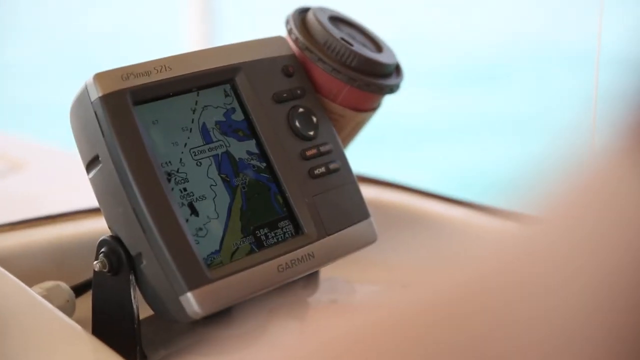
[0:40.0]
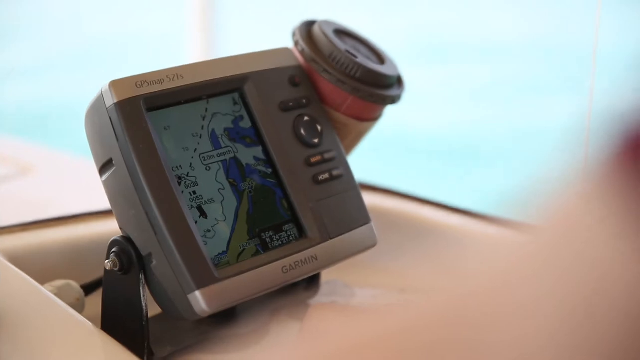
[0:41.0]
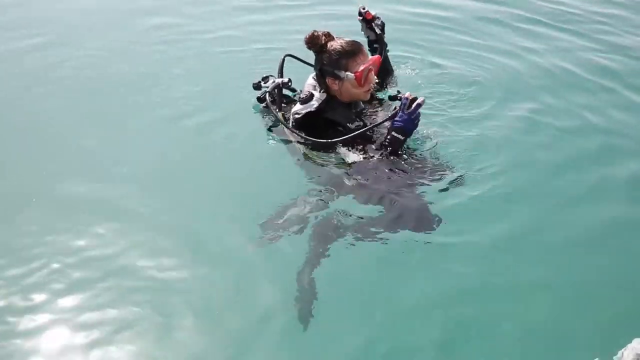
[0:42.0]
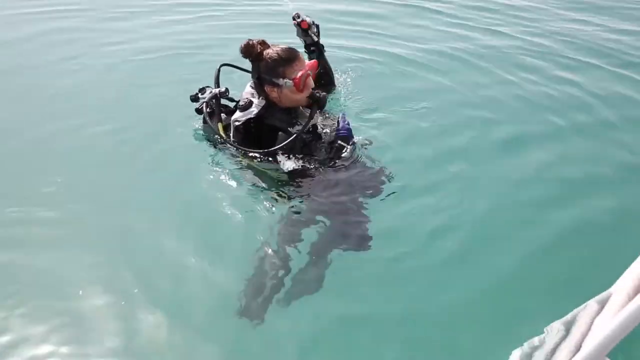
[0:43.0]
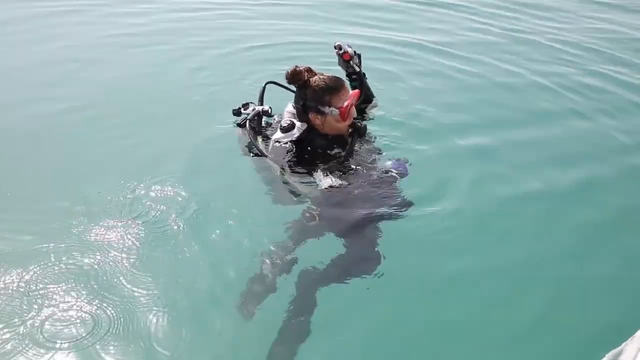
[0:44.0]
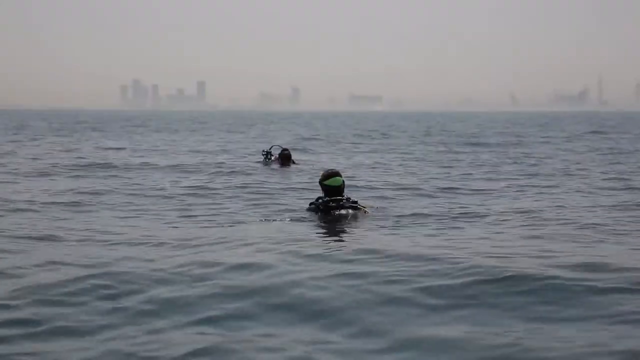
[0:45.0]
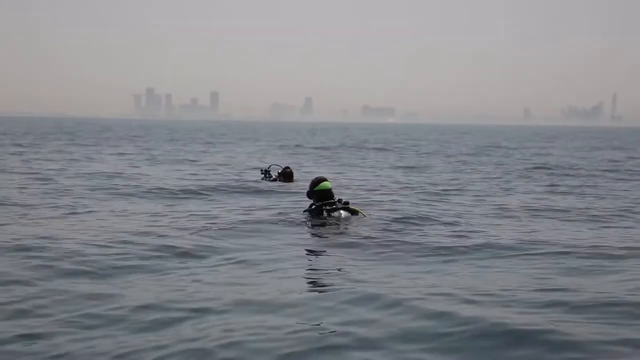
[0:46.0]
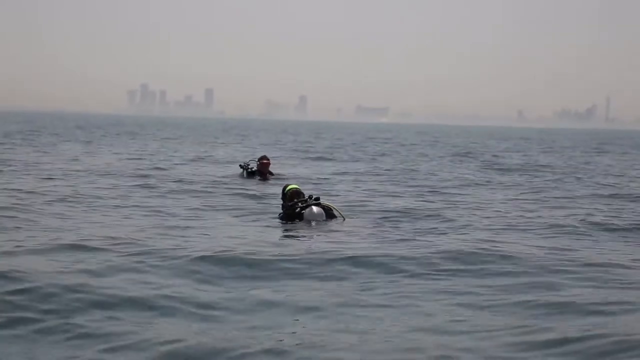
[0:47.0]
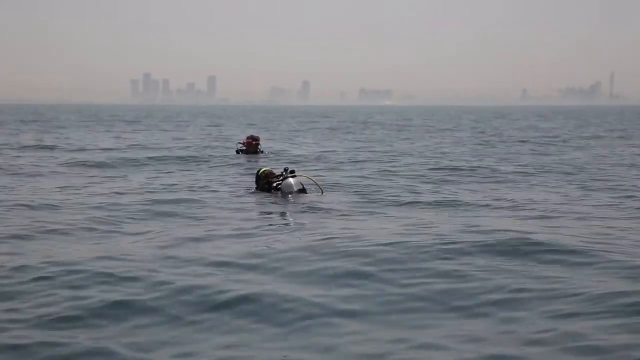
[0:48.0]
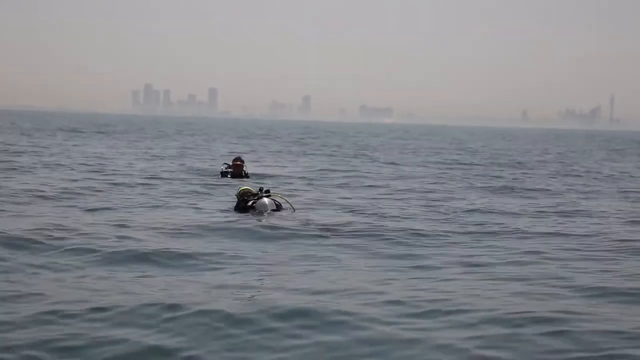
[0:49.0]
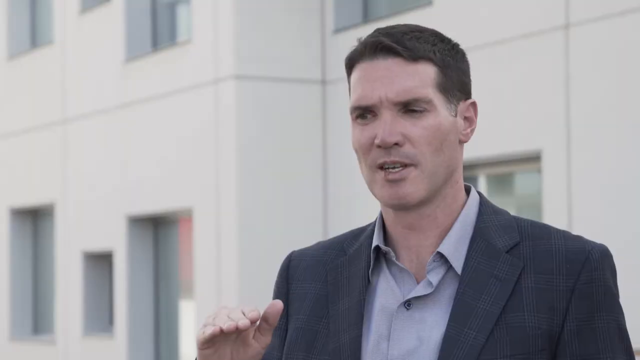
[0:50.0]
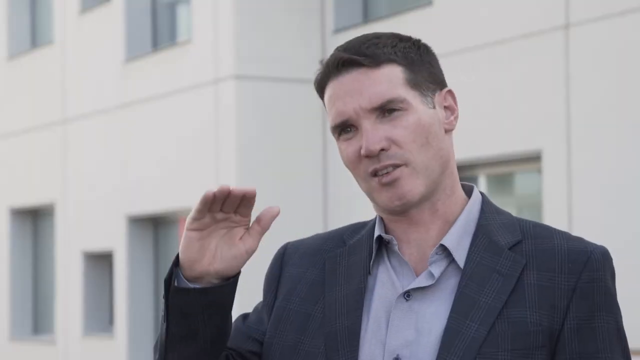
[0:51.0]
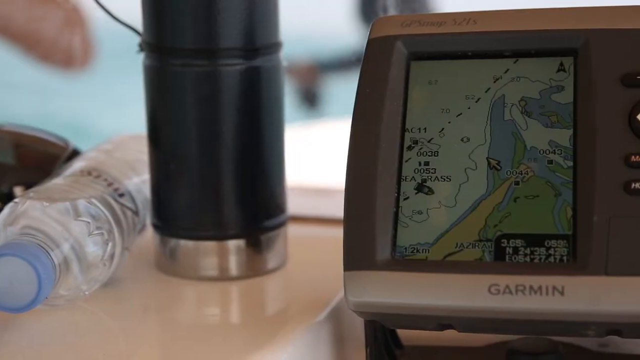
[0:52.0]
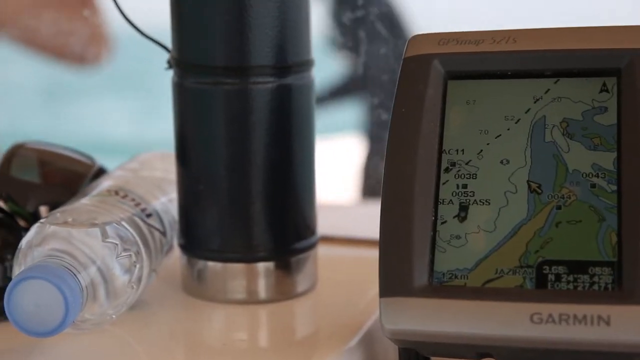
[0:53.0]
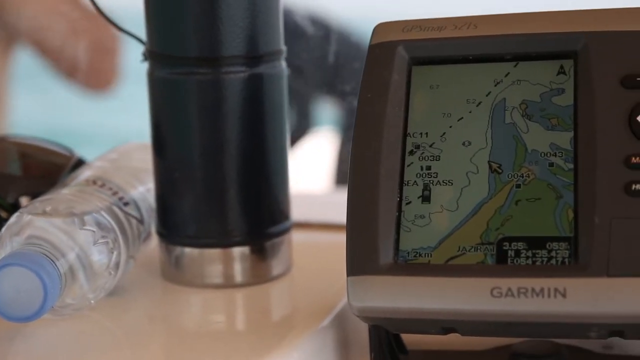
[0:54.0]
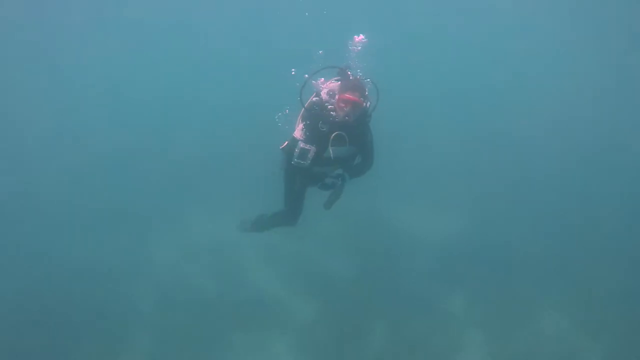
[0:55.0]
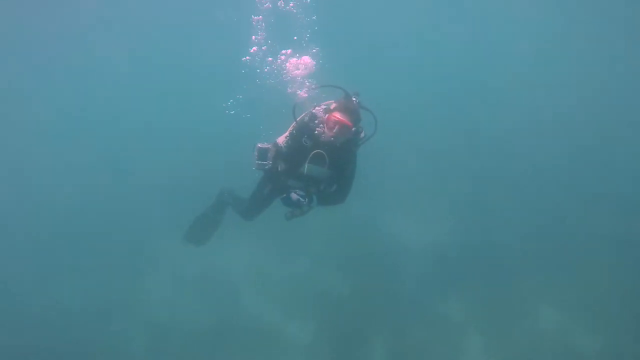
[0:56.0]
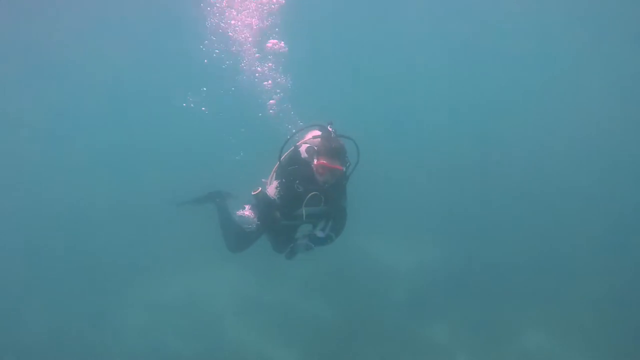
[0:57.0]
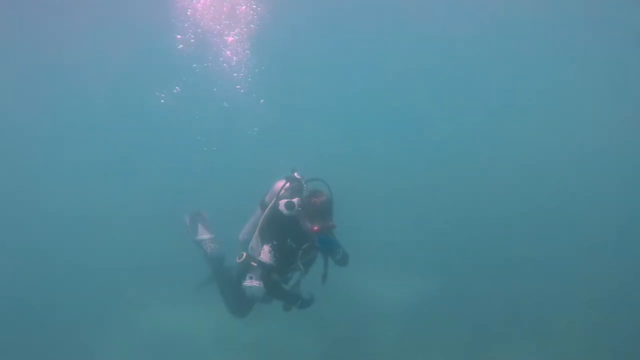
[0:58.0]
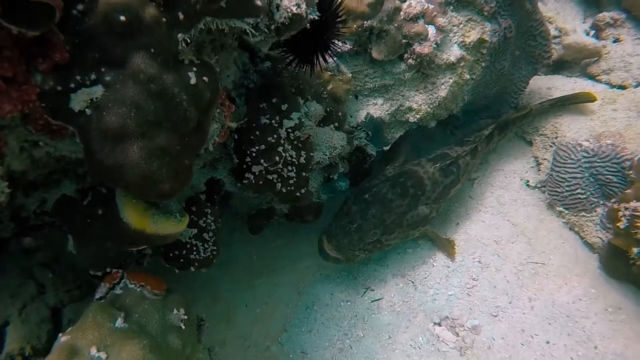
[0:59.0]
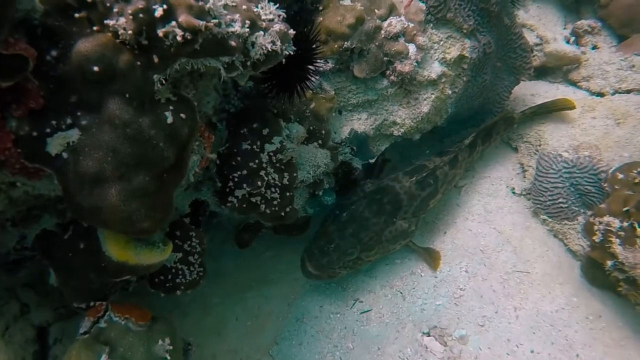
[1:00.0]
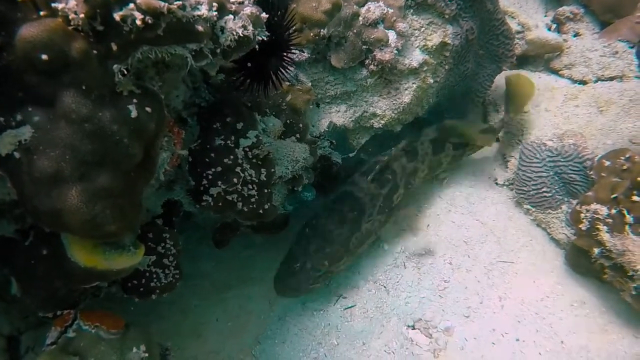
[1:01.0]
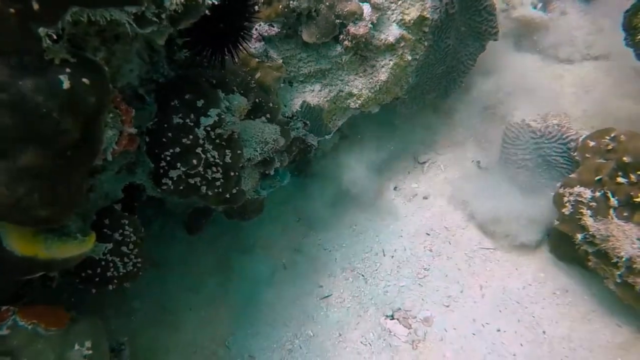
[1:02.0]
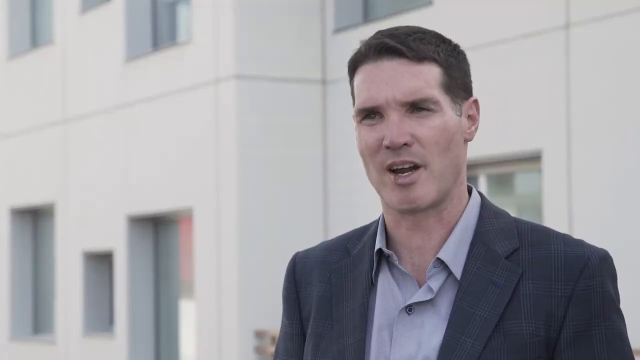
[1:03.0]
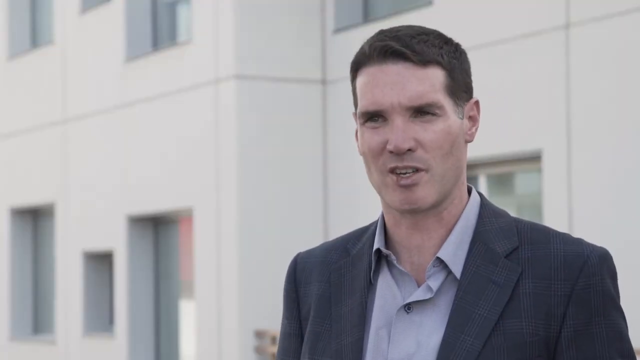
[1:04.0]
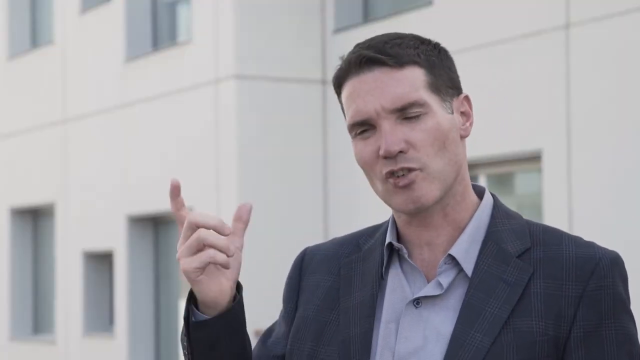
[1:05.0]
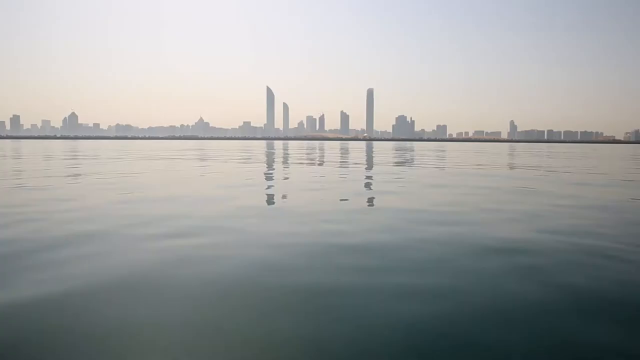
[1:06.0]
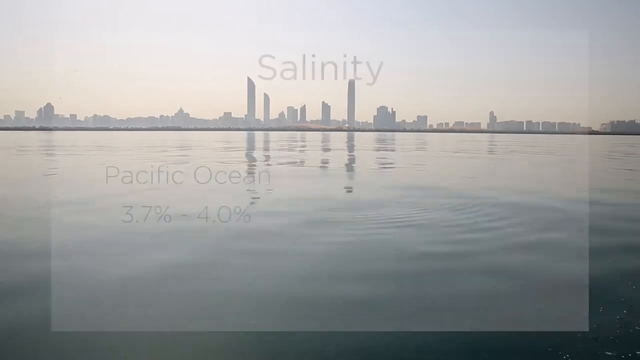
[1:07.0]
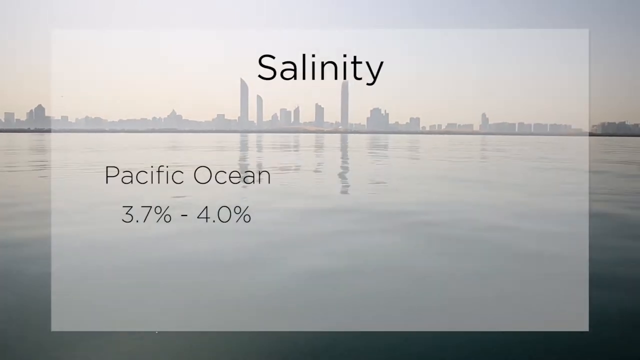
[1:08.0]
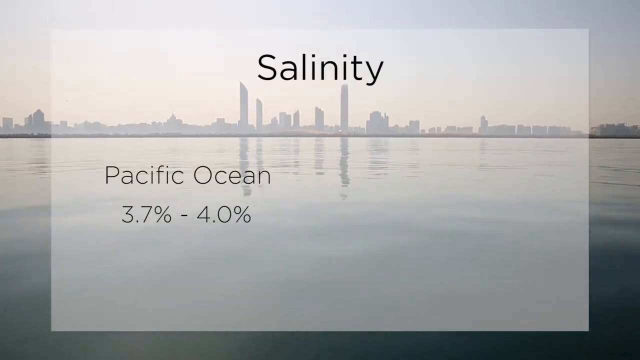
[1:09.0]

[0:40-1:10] Some sort of navigation-type software with a very small screen and touch buttons is shown on a device attached to a boat, with a coffee cup next to it. The woman who wore the life jacket on the boat is now in scuba gear. She has scuba goggles on and puts the scuba mouthpiece in her mouth to breathe, sort of floating outside of the water. Two people in scuba gear are then shown waiting in the water; the camera has panned out so that a city skyline is visible in front of them, the buildings appearing translucent in heavy fog. Waves roll, and the camera looks to be right up on a wave. The video cuts to the man in the suit, who explains things with his hand, then back to the software with a small screen showing what looks to be some kind of map. Next to it are a water bottle and a black coffee canister with a silver bottom. The video then cuts to someone in scuba gear diving underwater.